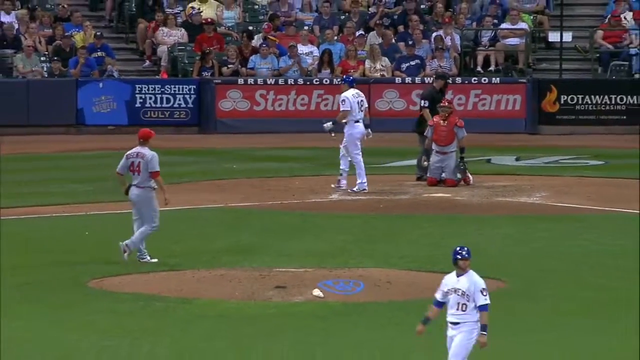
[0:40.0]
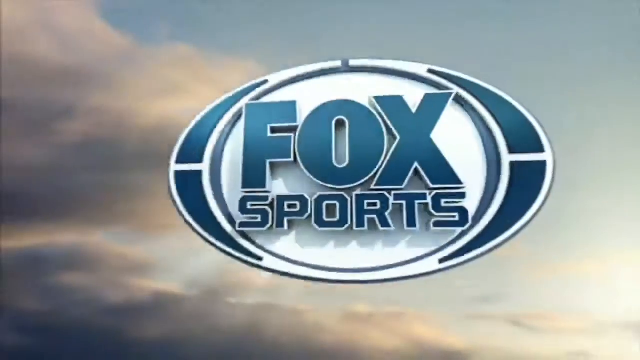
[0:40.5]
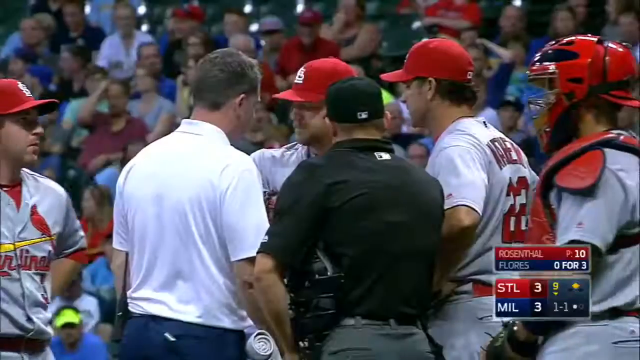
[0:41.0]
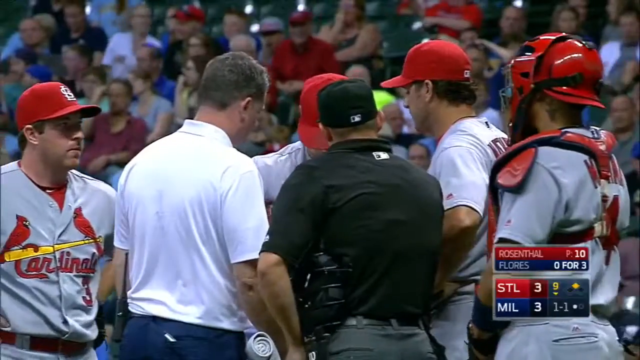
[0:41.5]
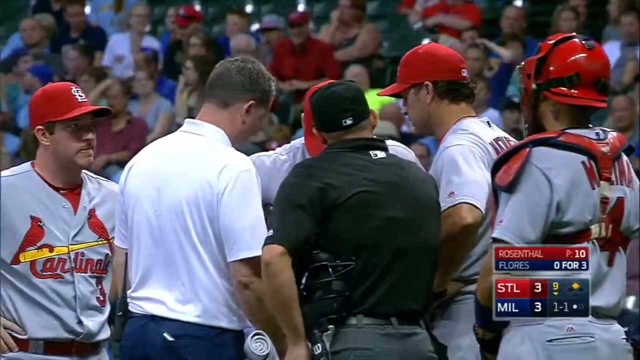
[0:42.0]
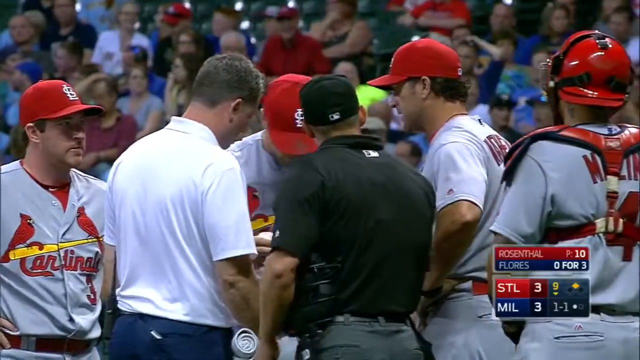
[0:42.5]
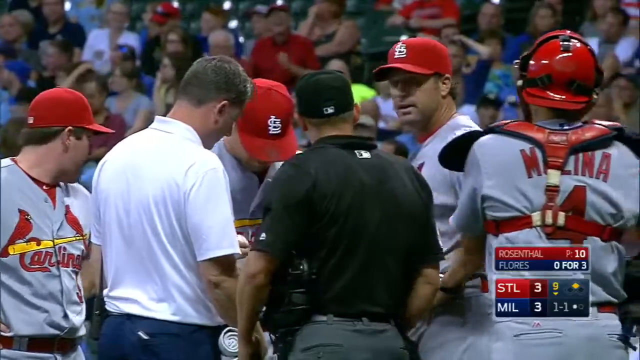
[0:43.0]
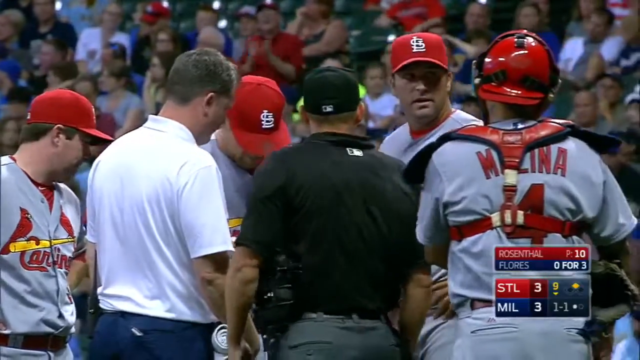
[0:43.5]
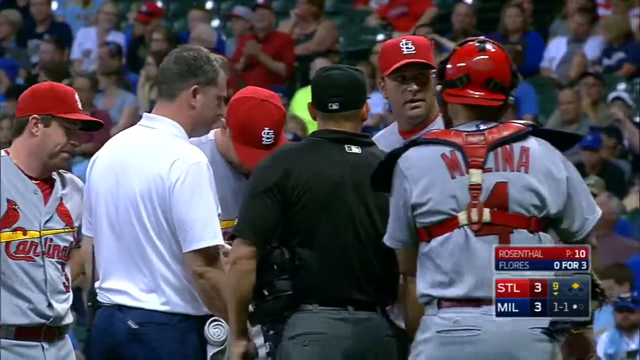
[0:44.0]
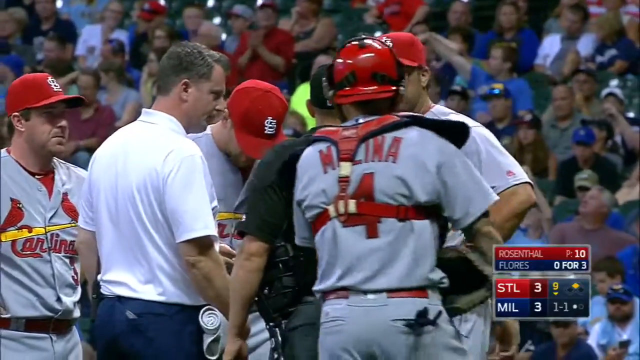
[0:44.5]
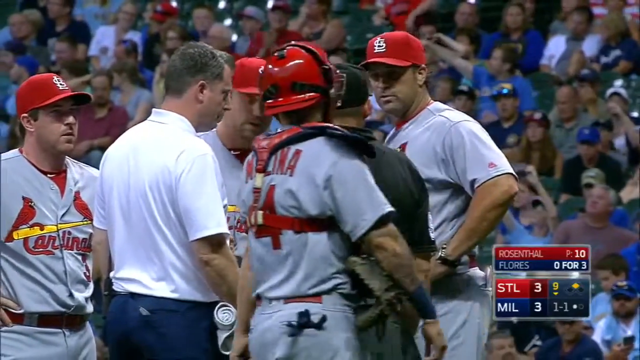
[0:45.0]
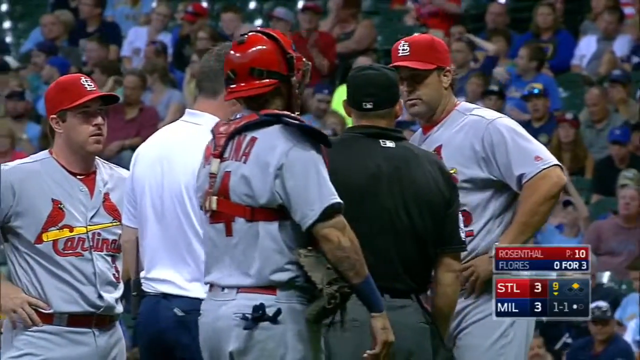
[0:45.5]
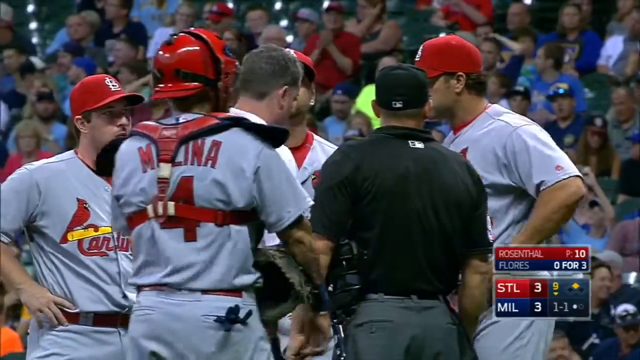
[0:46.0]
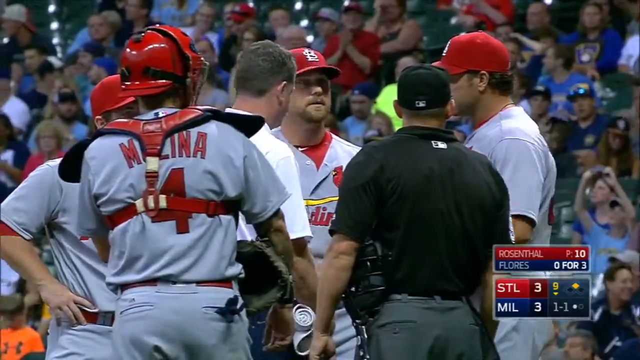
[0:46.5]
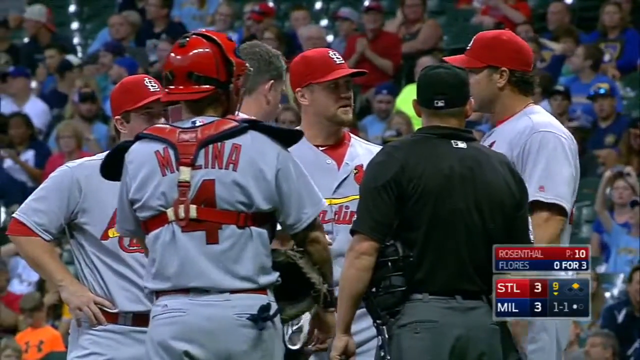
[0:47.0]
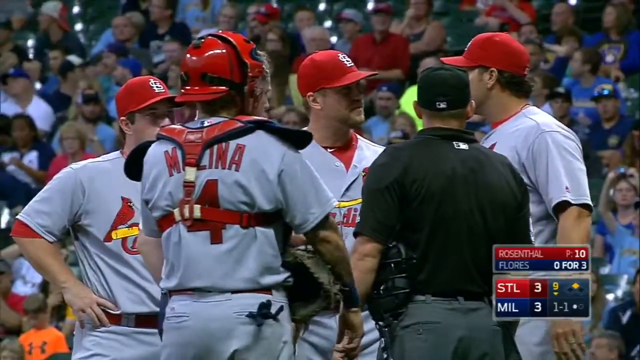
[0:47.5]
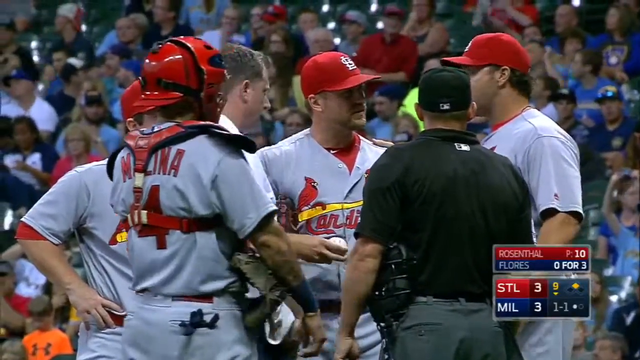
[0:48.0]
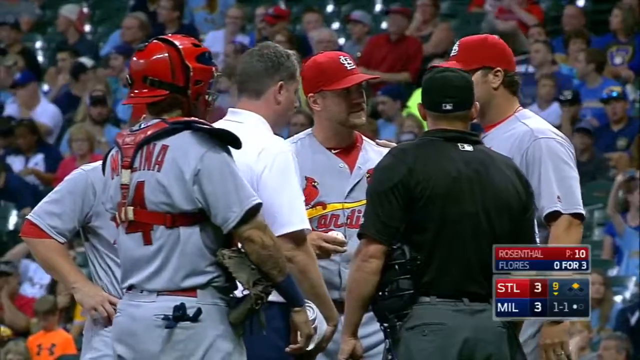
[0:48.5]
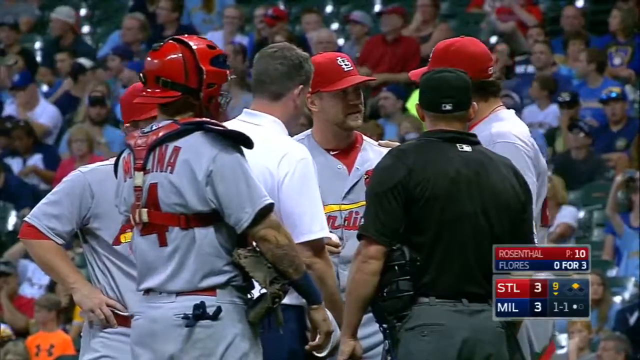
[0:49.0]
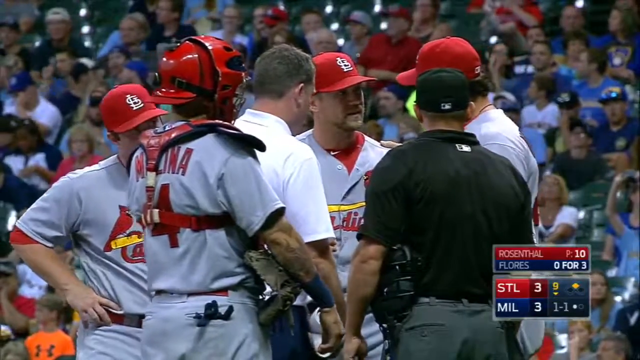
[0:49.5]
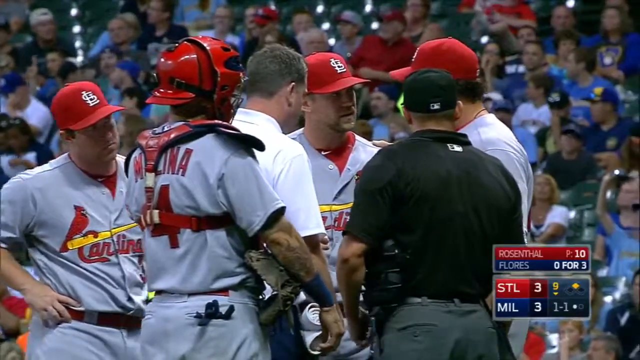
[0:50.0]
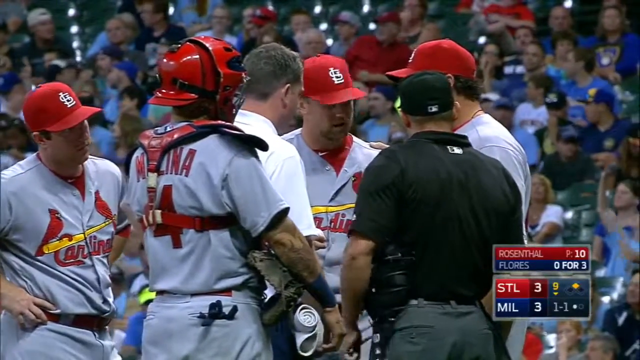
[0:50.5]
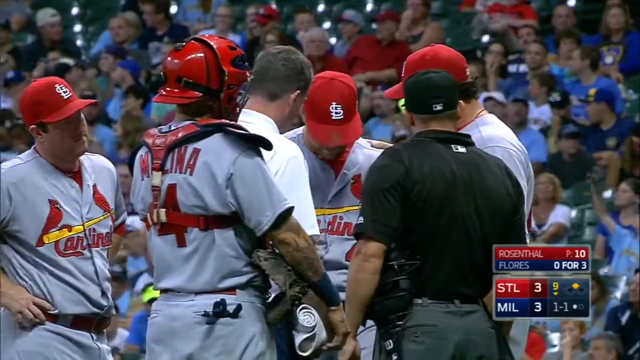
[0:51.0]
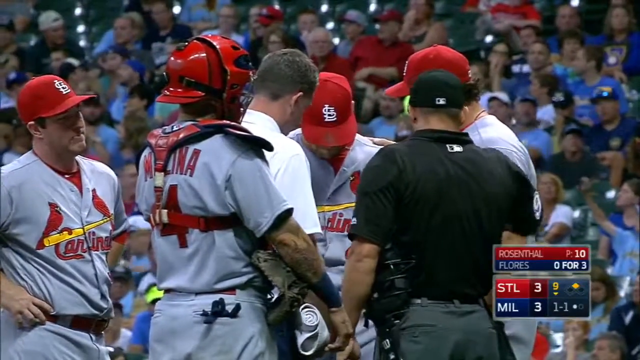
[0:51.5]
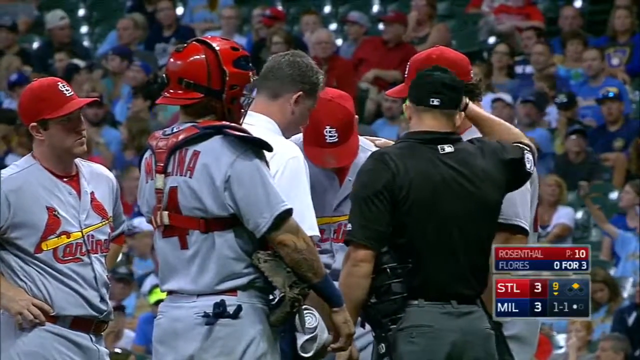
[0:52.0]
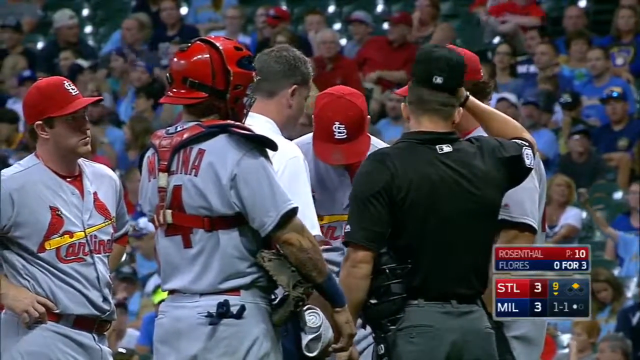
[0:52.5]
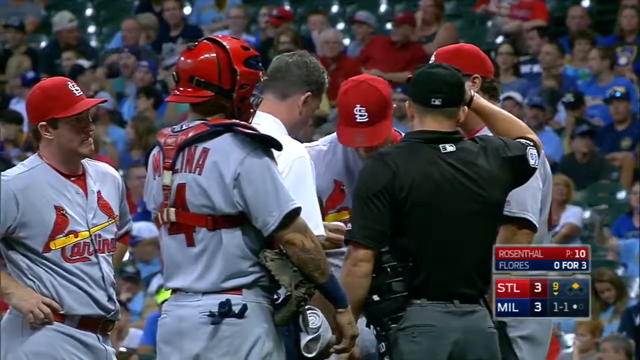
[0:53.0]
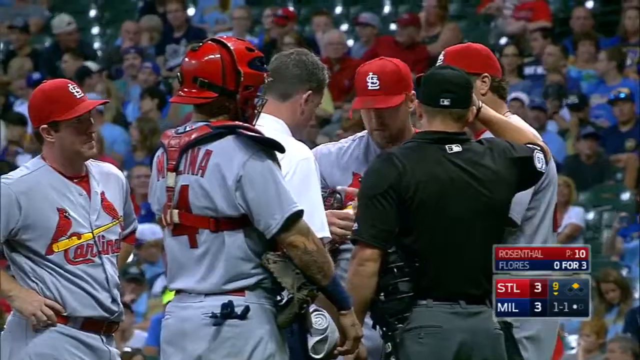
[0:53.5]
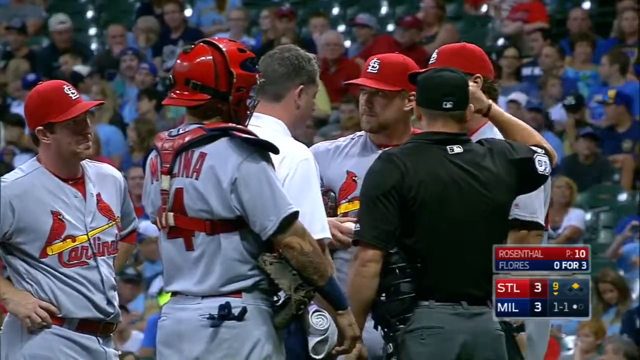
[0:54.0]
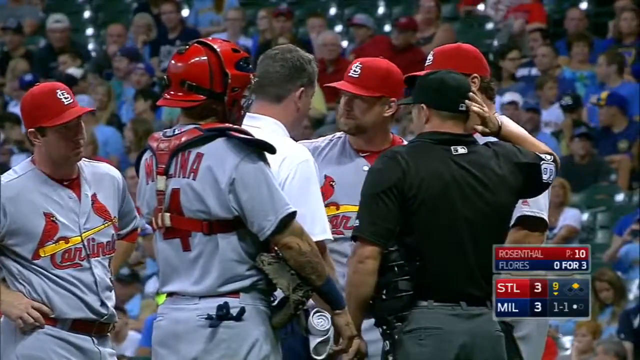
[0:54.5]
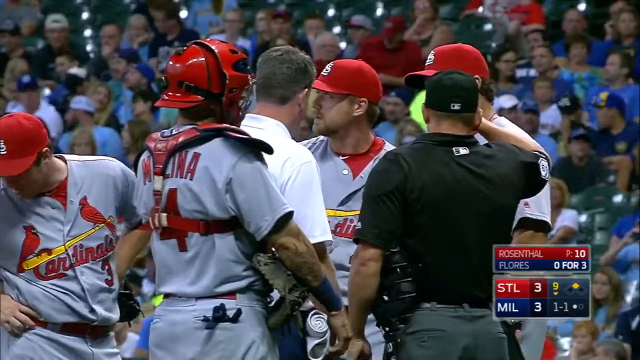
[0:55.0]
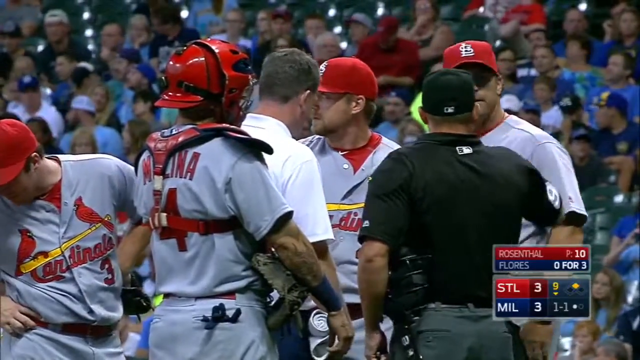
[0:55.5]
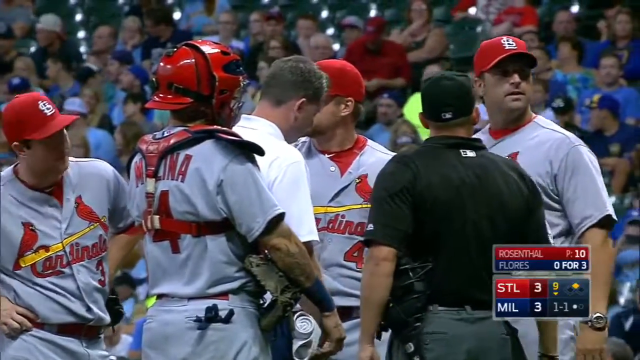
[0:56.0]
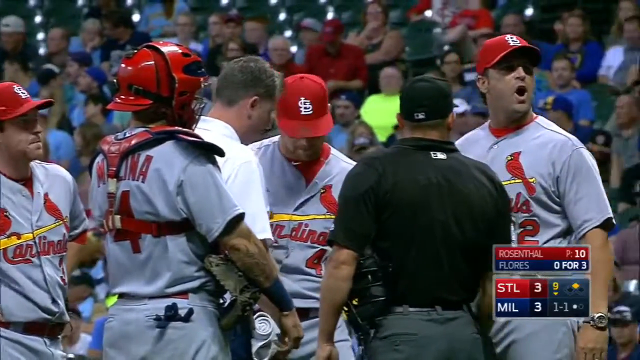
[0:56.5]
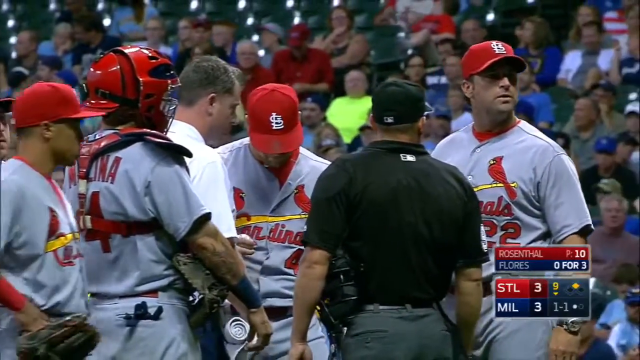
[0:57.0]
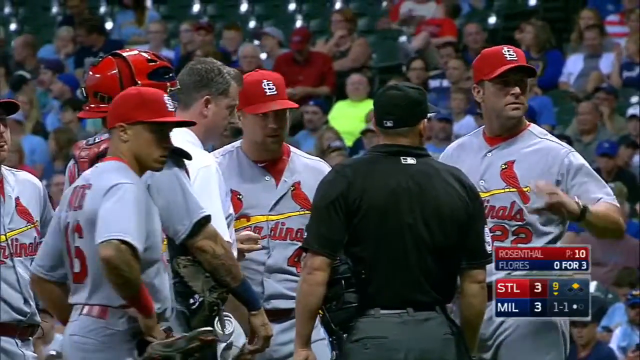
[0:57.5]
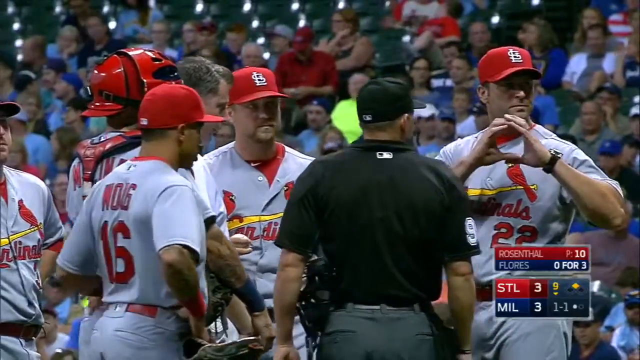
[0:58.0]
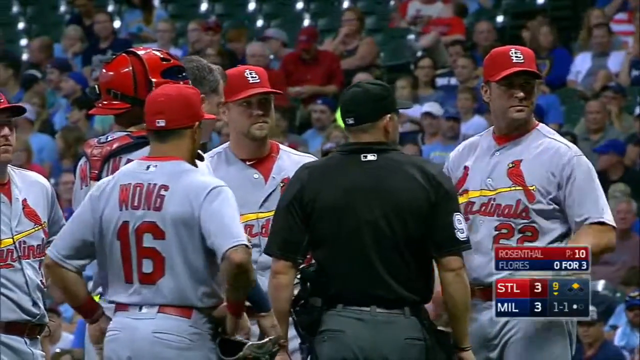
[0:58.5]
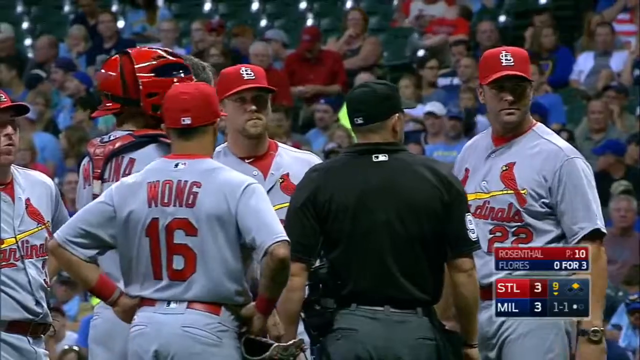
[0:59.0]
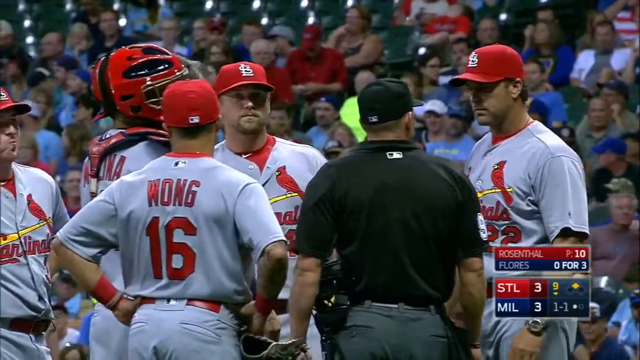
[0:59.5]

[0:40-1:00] The game between the Cardinals and the Milwaukee Brewers continues, with sponsors such as Potawatomi, State Farm and Brewers.com on the barrier in the background. Men, women and children are in the stands, wearing many shirt colors, including greens, reds, blues, whites and some lime green or yellow. The score is three to three, with one ball and one strike. The pitcher may be injured; many players surround him, along with a coach, someone in a white shirt who is maybe a doctor, and possibly a replacement pitcher, in a sidebar meeting. The Cardinals' outfits are grayish with red writing. The game is stopped. A Fox Sports logo pops up and then goes out. The score is 3-3.